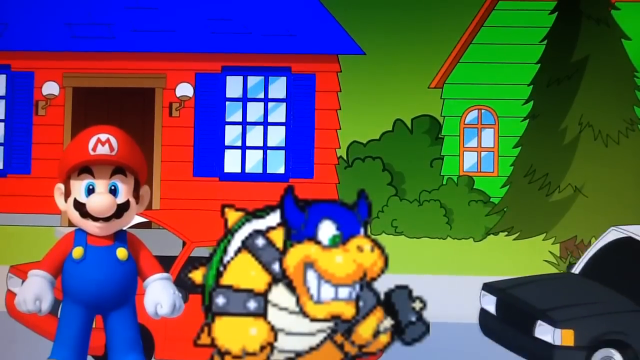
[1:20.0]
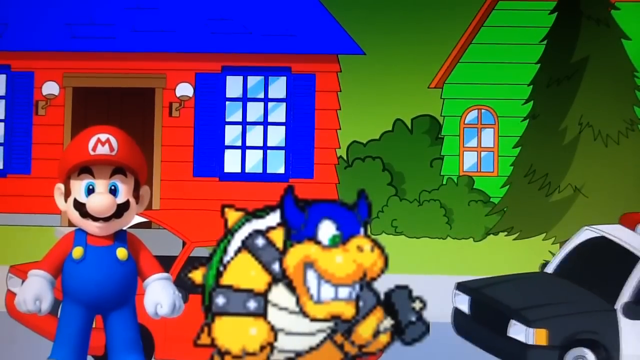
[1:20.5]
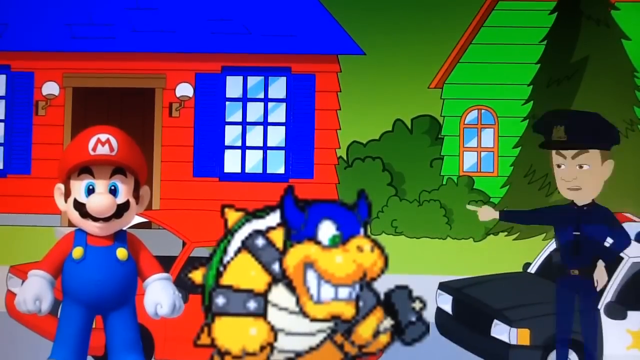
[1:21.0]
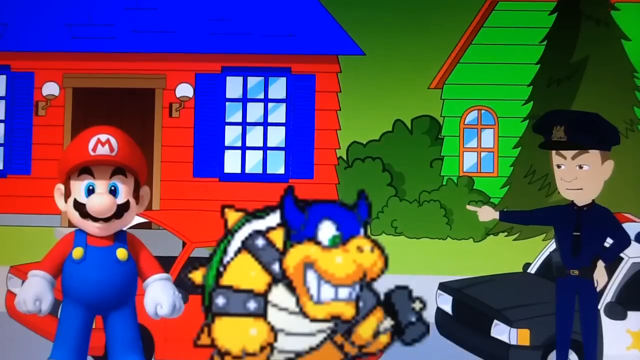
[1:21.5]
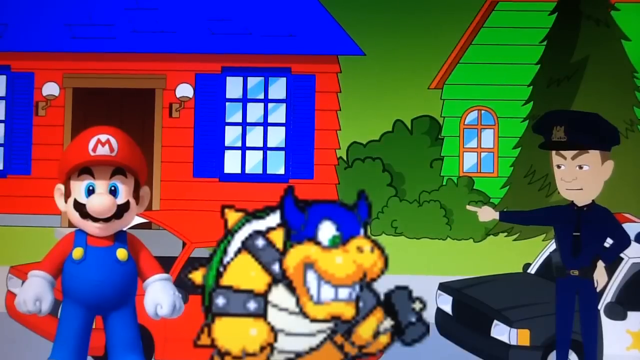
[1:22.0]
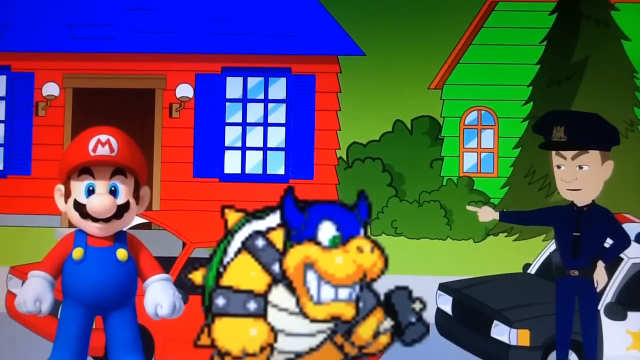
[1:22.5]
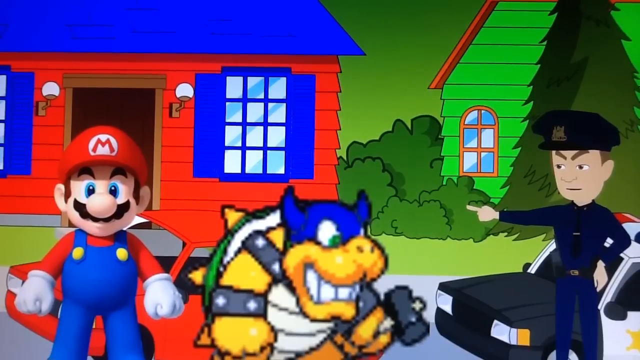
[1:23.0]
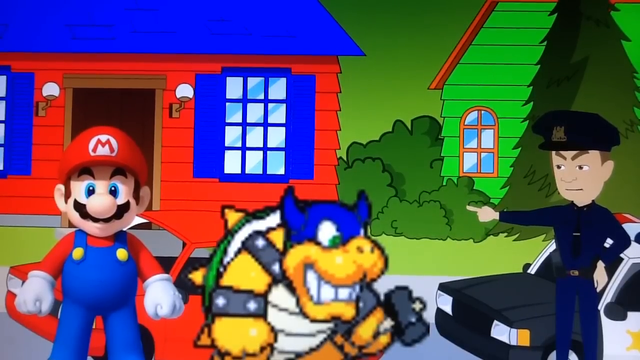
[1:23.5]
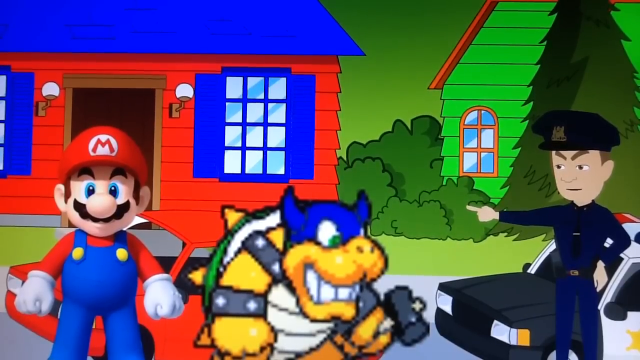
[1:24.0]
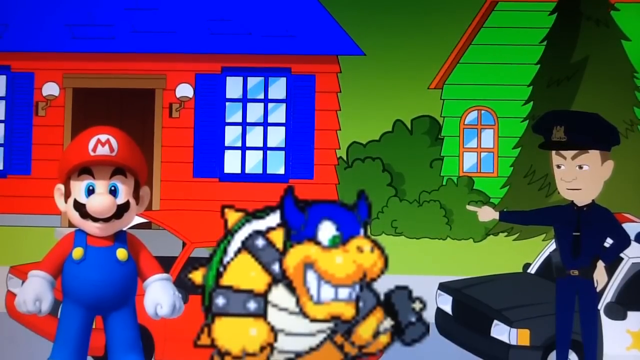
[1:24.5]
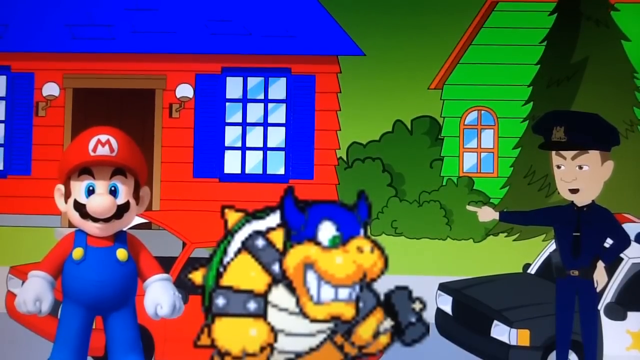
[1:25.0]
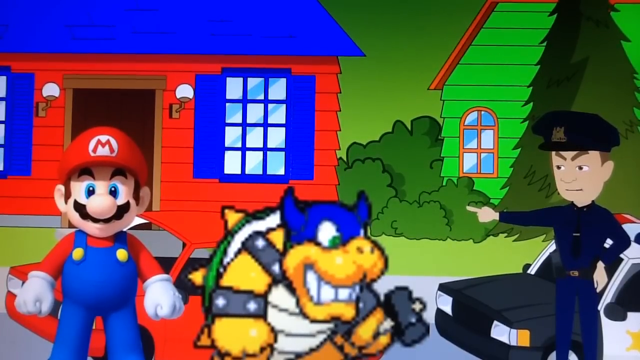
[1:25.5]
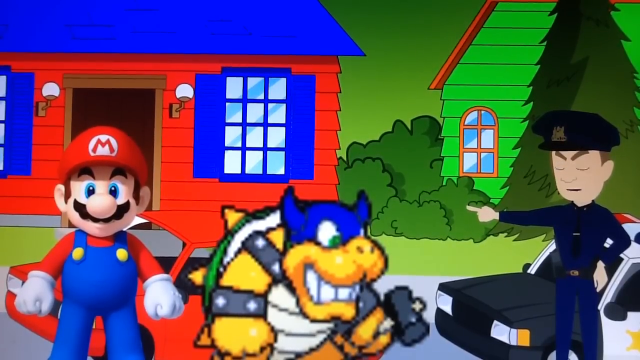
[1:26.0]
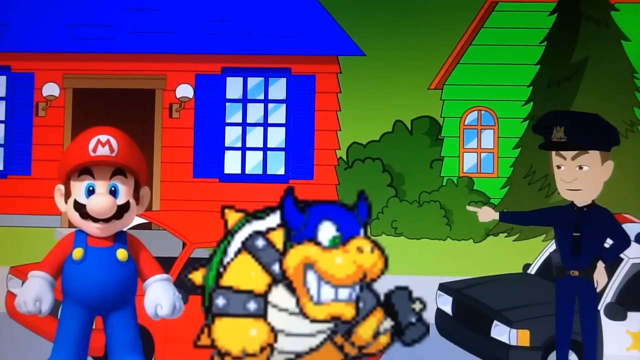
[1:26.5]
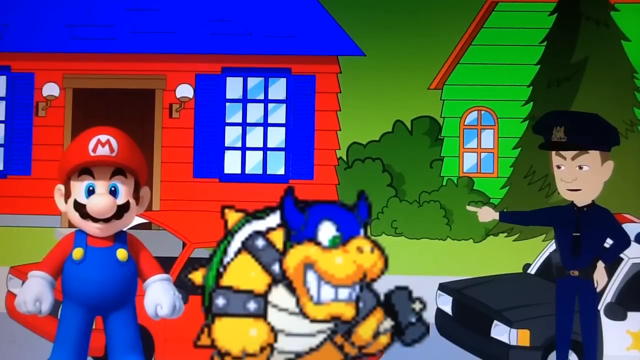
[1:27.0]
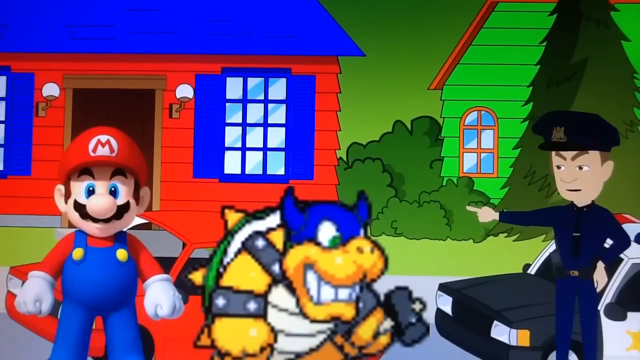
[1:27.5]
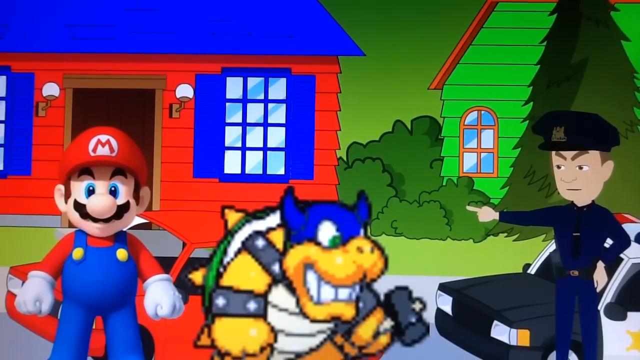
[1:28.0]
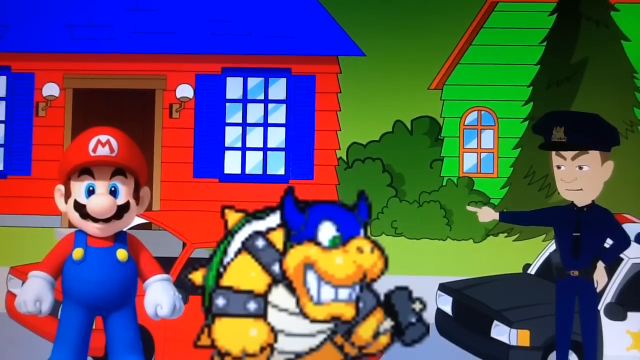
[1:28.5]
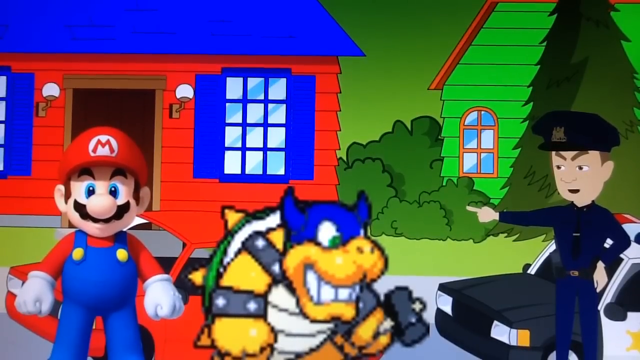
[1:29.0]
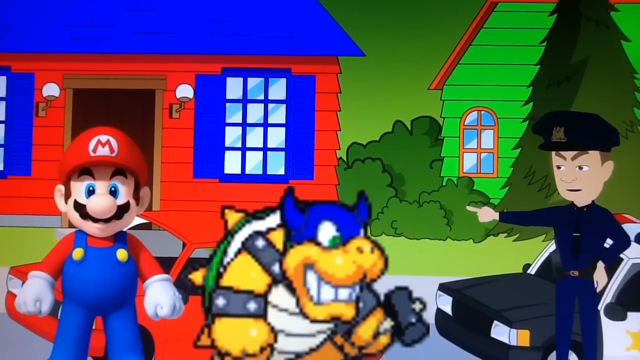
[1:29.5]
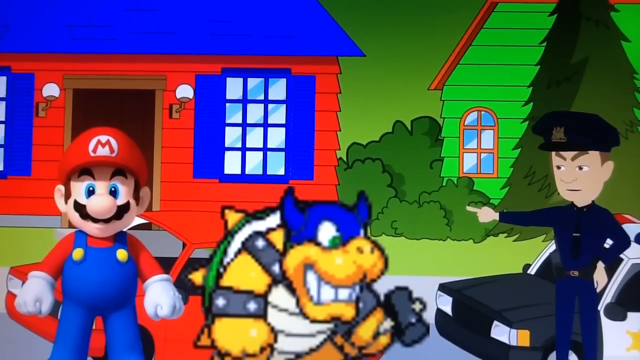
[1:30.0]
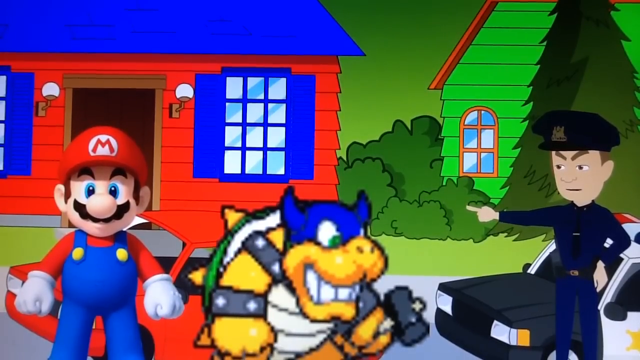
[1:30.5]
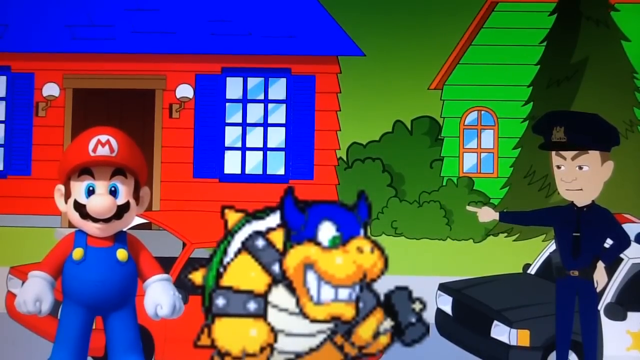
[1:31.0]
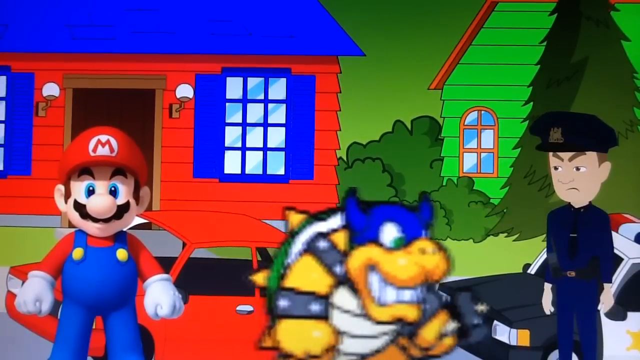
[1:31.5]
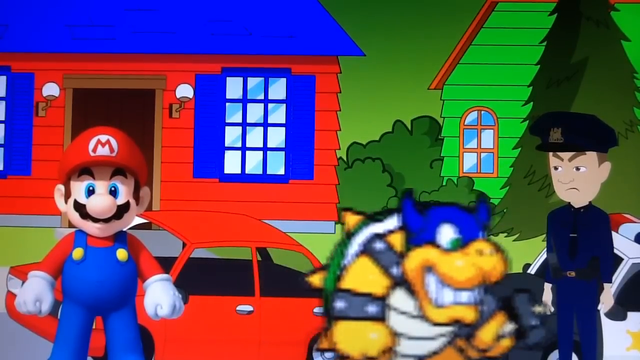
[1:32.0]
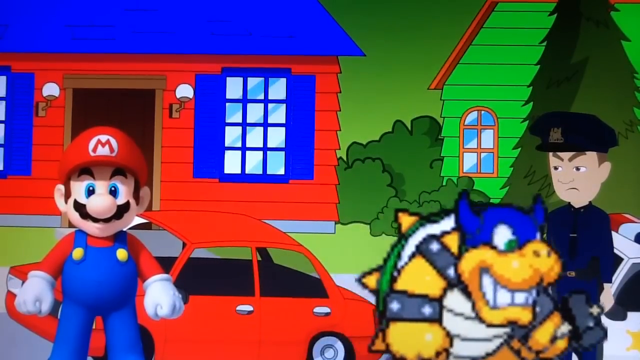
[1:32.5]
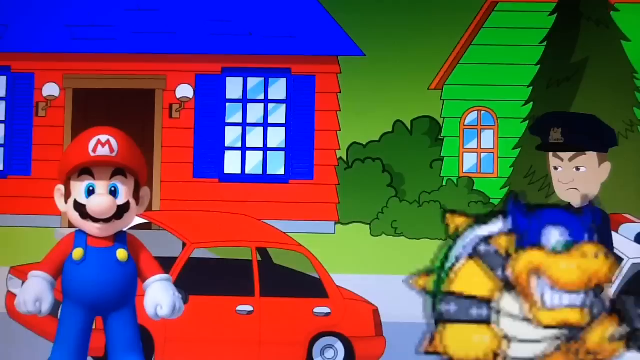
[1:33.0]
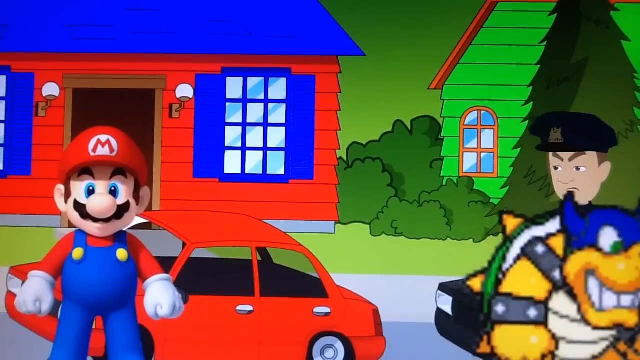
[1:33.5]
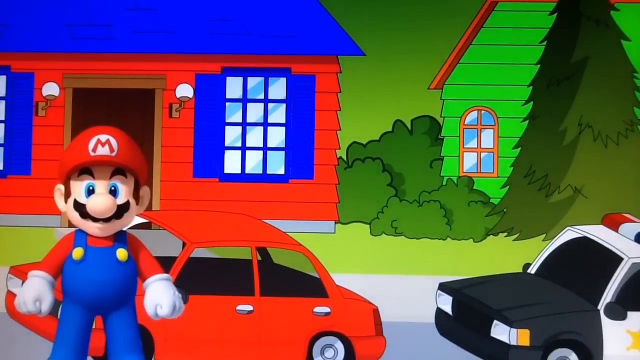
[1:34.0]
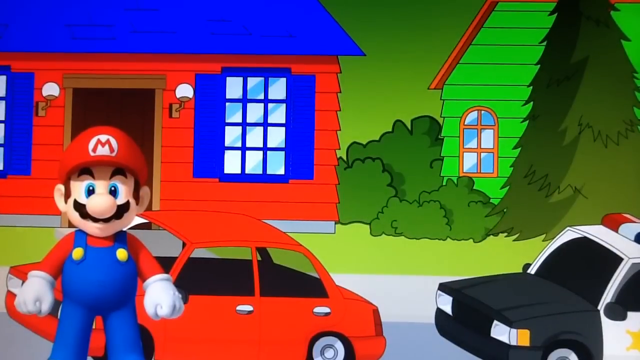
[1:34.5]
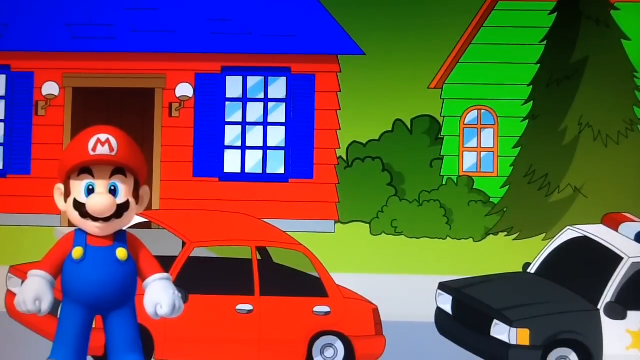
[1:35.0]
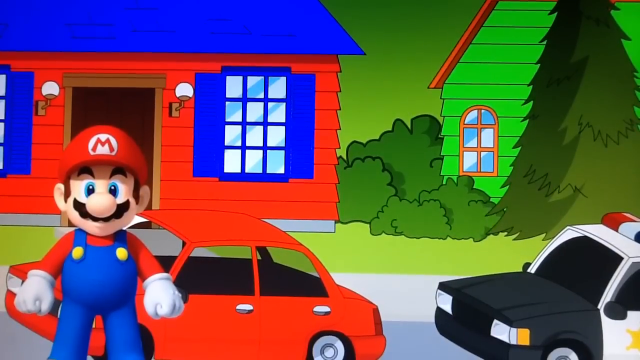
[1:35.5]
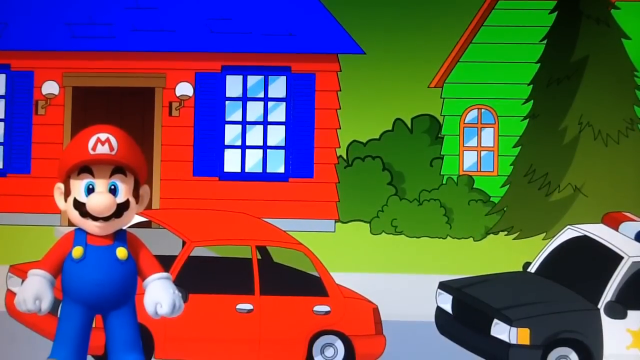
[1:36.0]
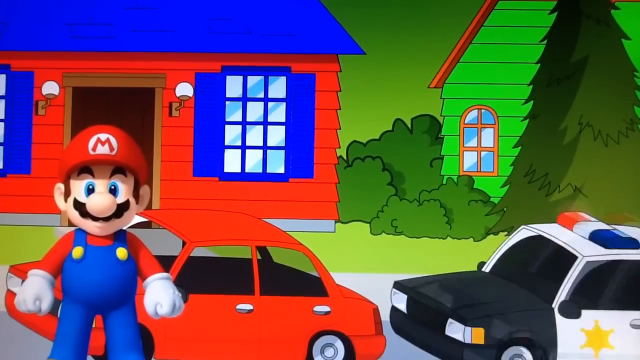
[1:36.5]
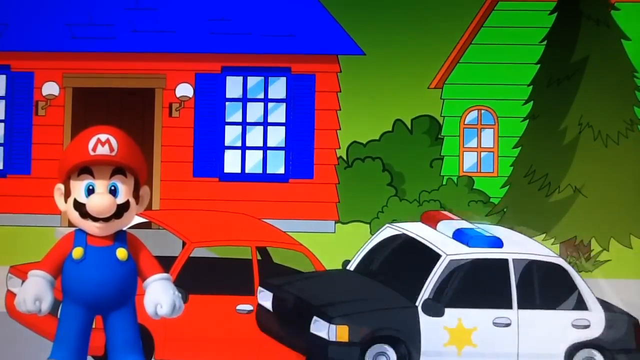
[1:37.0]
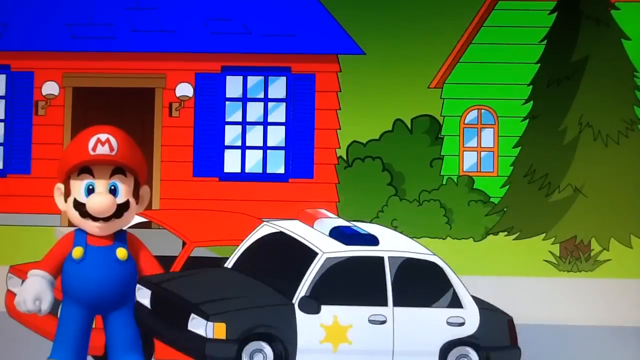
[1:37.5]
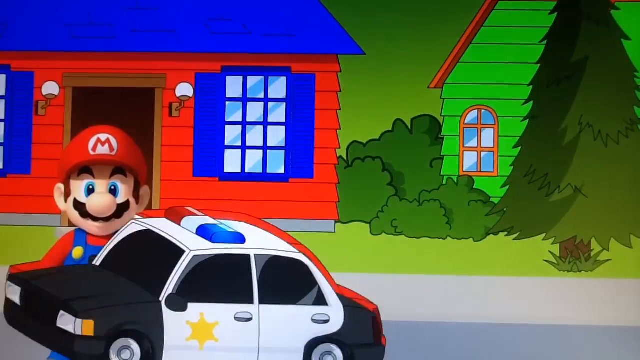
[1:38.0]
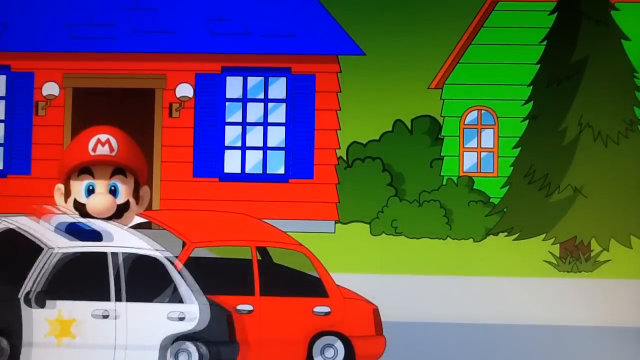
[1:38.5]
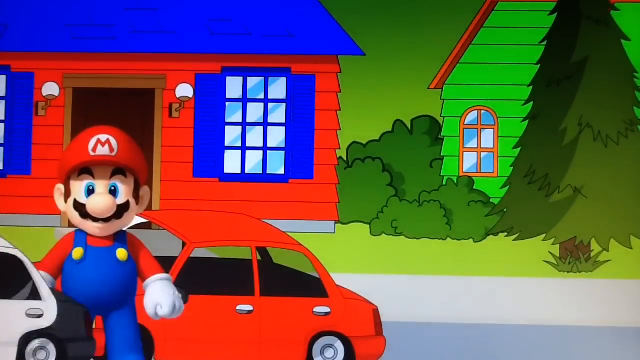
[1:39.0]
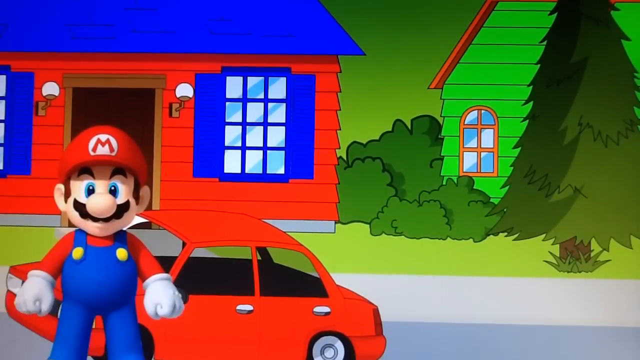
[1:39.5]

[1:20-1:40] The black police car, with a red police light on top, pulls up outside. Mario is on the left, wearing his red hat with a white logo with a red M, with blue eyes, a round mustache and eyebrows, a red shirt, white gloves, and blue overalls with two yellow buttons; he looks like a three-dimensional figurine. Rookie is yellow, and his expression does not change, keeping the same kind of grimace. A police officer appears outside the car; he looks like a thin Caucasian male in a dark navy blue police uniform with a long-sleeve shirt, navy blue pants, a black belt, a black tie with a tie clip, and a hat with an emblem in the center. He has medium brown hair, eyebrows and brown eyes. With a very stern look, he points at Rookie, and his mouth moves as he talks to him, but no call-out bubble appears for him. Rookie slowly walks behind the officer, and they apparently both get into the officer's car. The police car, with a black hood, a black trunk, a white main body and a gold star on the driver's side door, drives out of the scene from right to left, passing in front of Mario and his car.